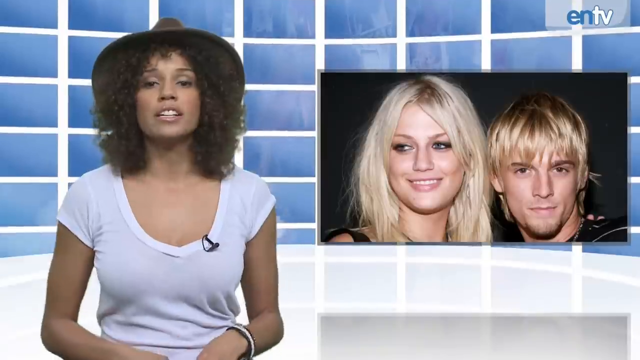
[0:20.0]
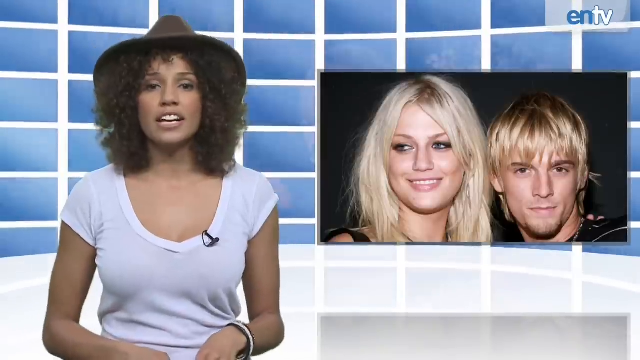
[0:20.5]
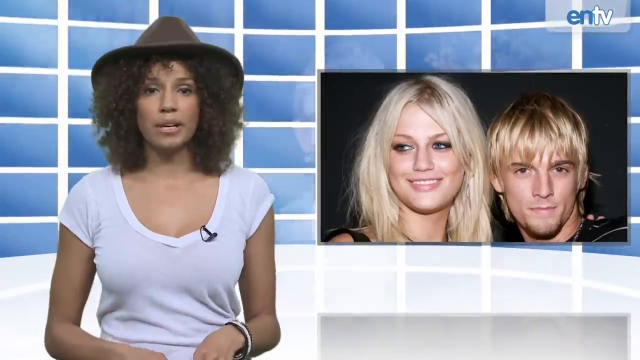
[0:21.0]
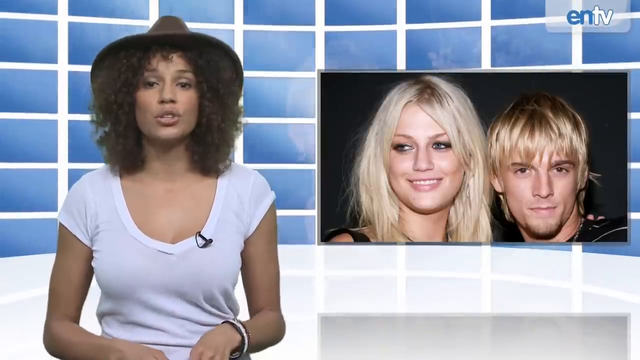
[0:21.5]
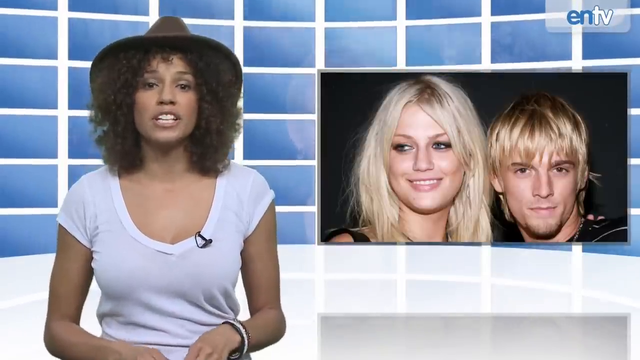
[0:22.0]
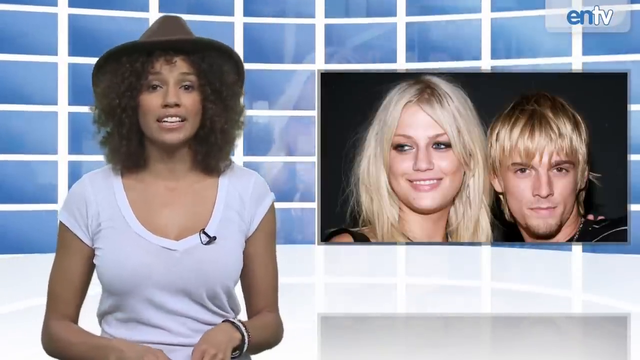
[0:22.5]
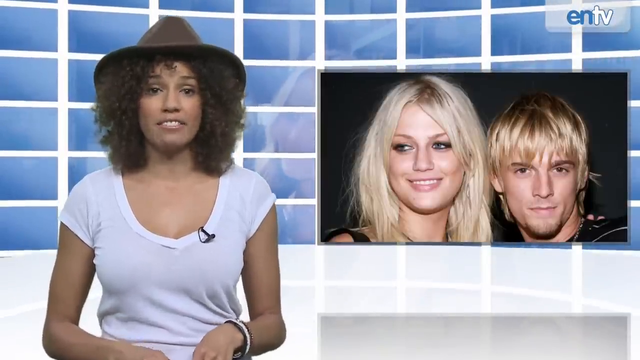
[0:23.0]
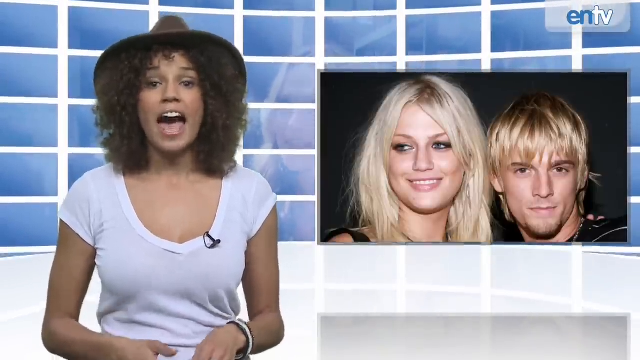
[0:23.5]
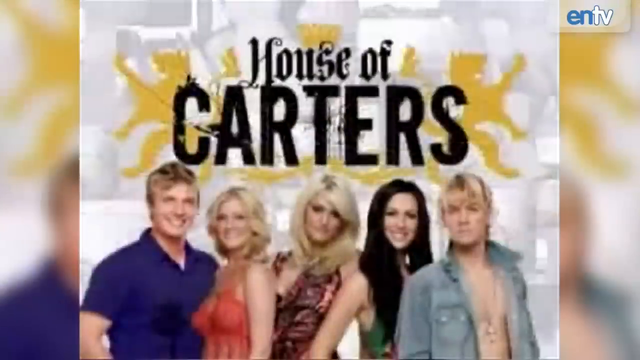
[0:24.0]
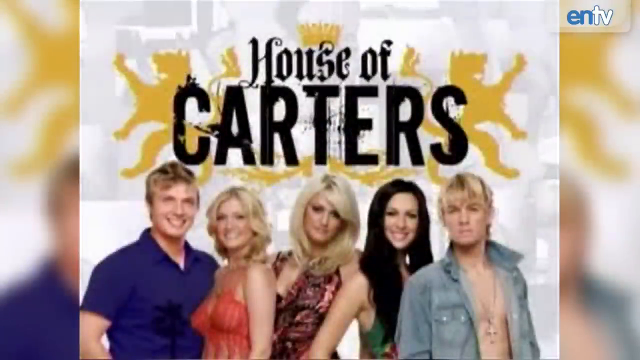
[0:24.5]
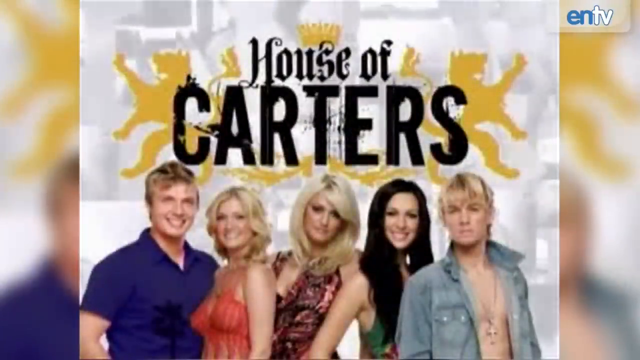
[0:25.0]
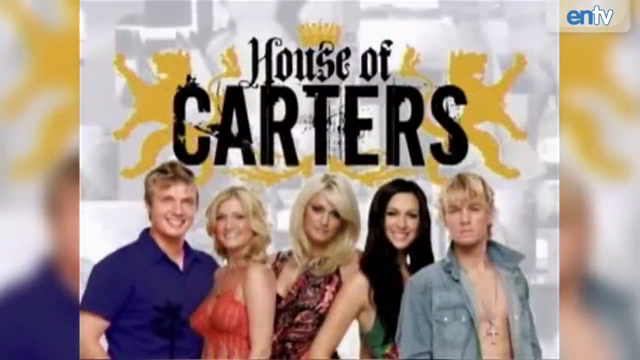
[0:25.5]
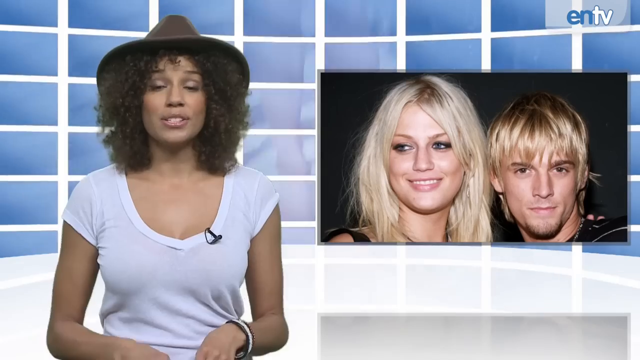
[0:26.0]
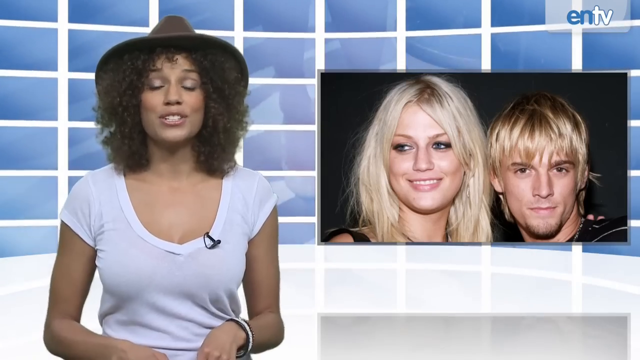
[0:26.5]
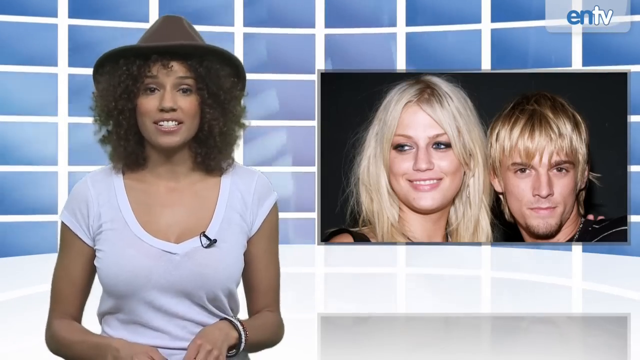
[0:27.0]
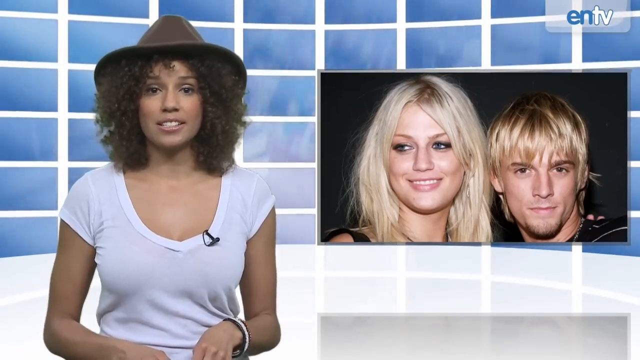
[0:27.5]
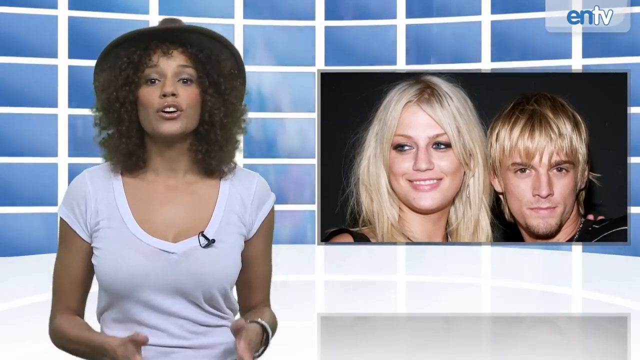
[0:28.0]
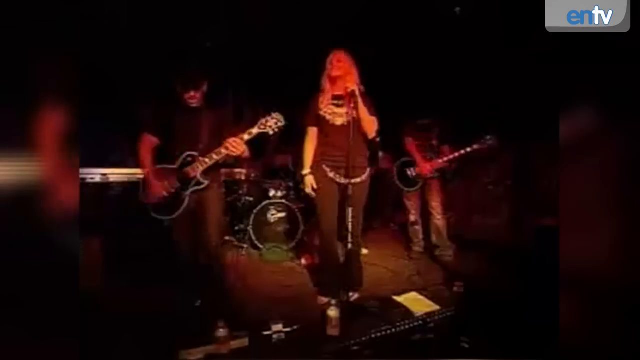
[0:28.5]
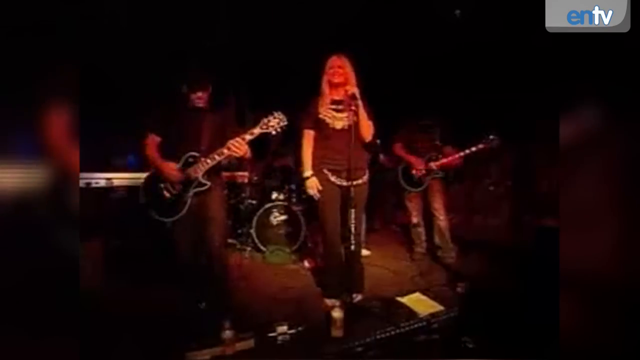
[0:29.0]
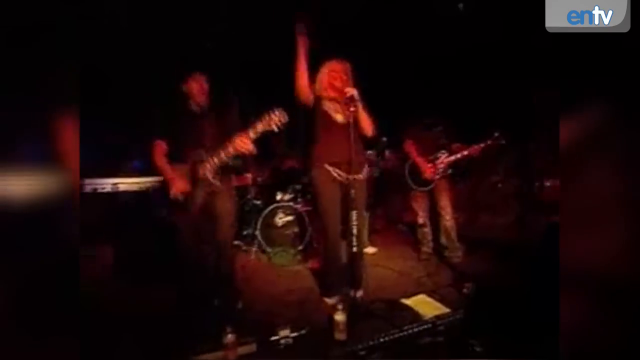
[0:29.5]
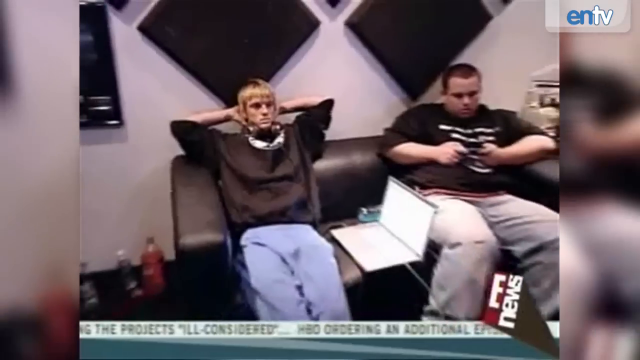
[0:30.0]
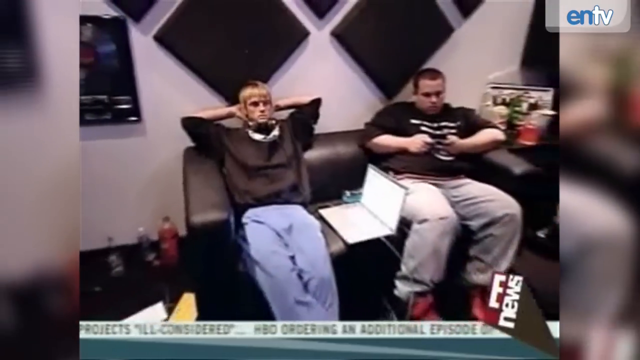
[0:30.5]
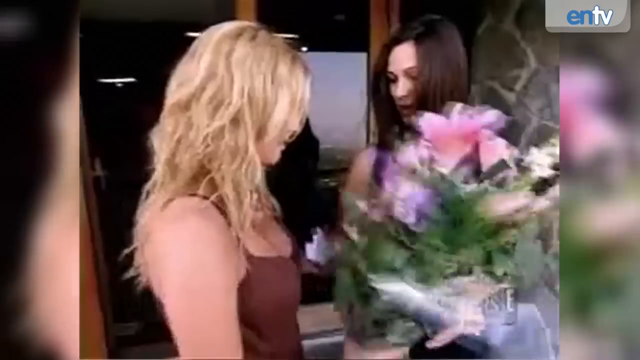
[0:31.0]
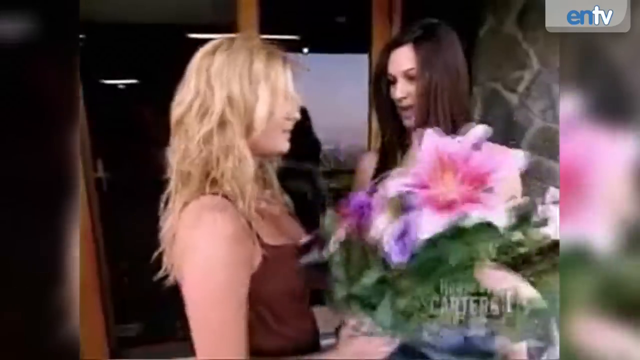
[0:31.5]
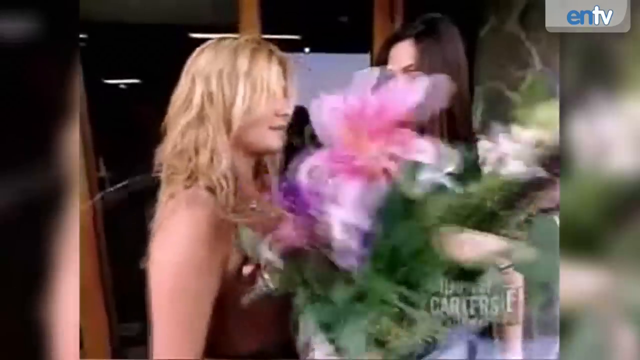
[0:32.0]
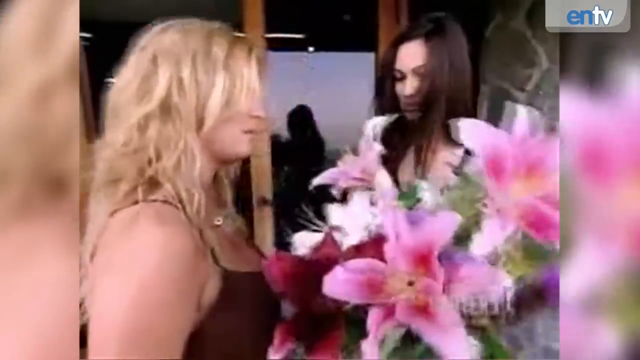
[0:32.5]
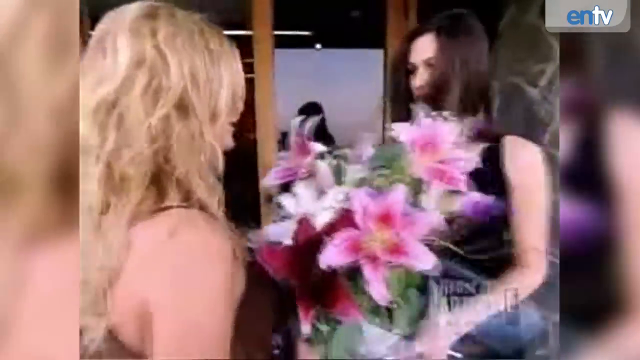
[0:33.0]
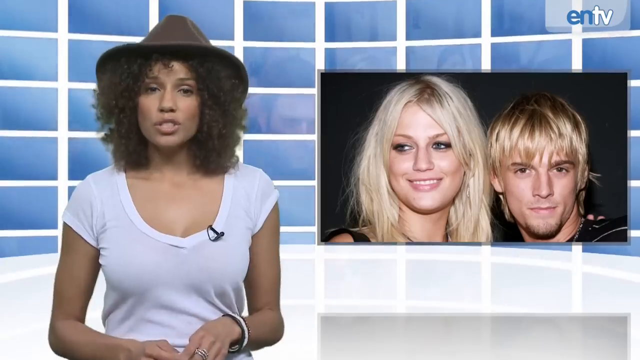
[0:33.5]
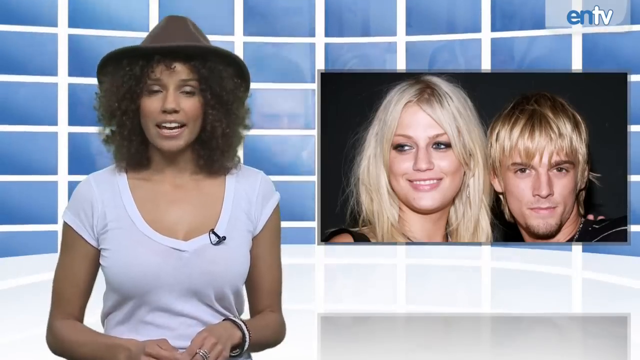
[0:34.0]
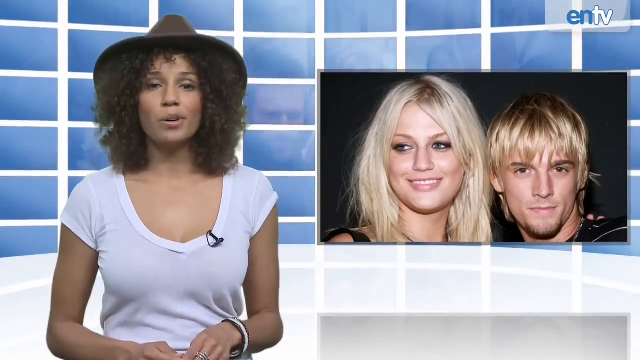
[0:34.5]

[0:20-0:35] The newscaster speaks further to camera. An image shows the words "House of Carters", which looks like it was possibly a TV show, with five people depicted under the House of Carters logo. The video cuts to footage of a band performing on stage, then to footage of the same blonde man sitting on a couch next to a different man. Next comes footage of the blonde woman receiving a very large bouquet of flowers from a brunette woman. The newscaster then speaks to camera again.